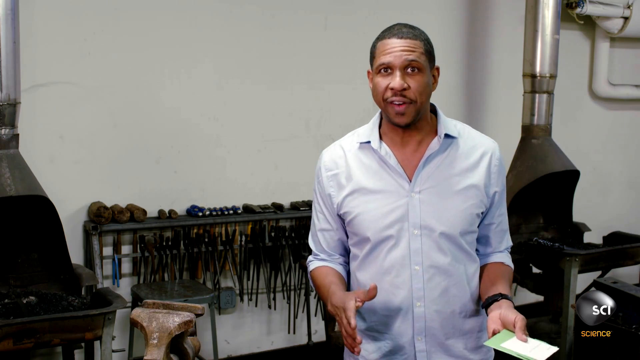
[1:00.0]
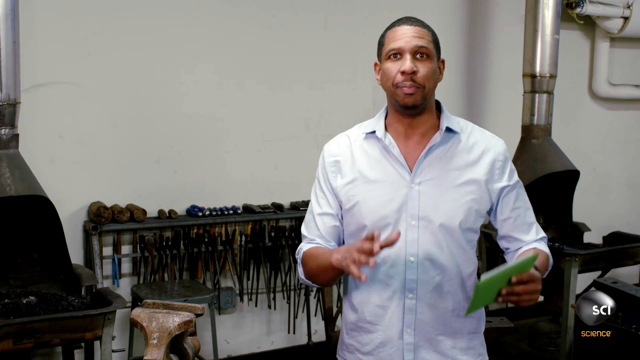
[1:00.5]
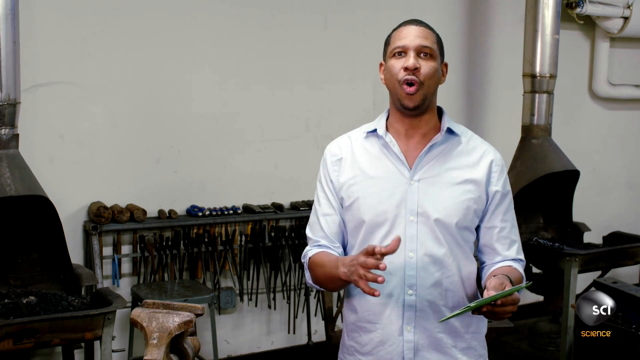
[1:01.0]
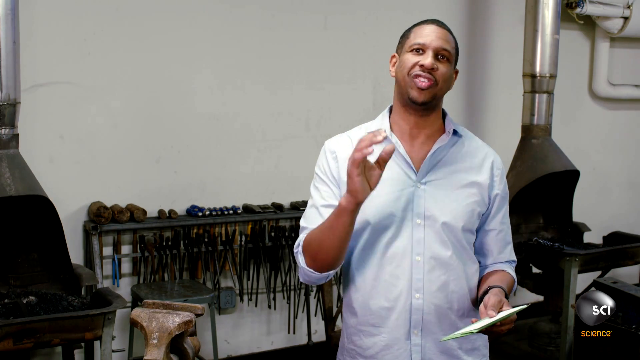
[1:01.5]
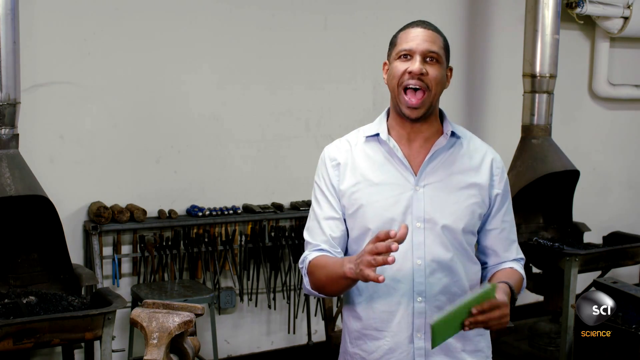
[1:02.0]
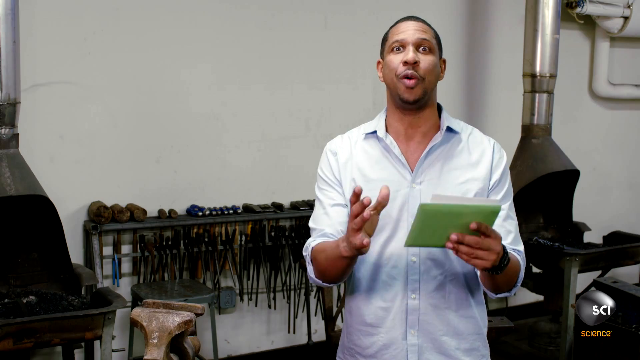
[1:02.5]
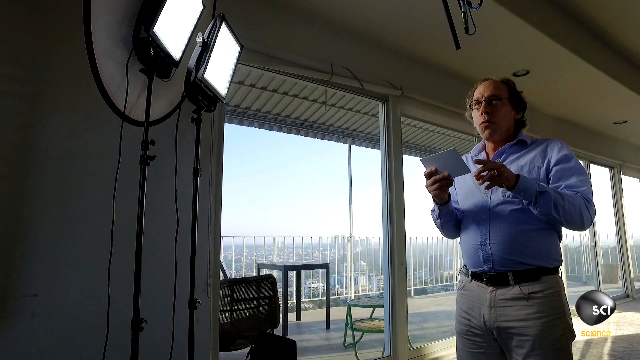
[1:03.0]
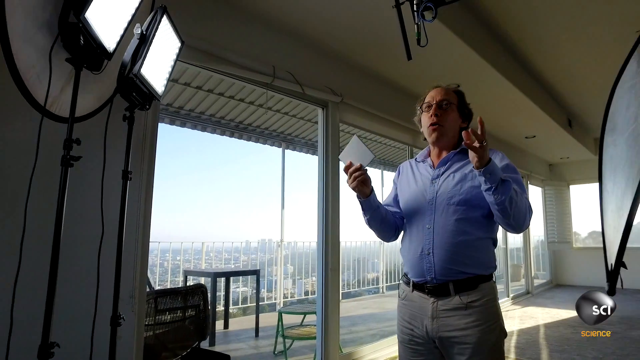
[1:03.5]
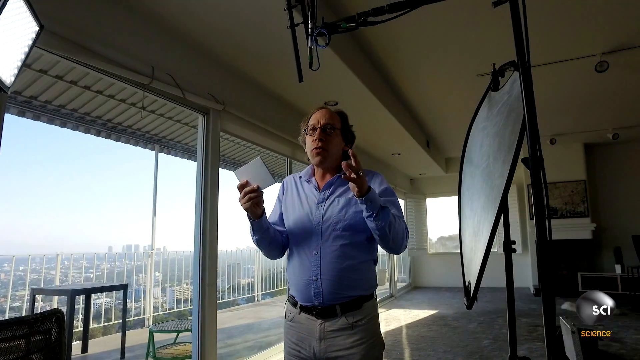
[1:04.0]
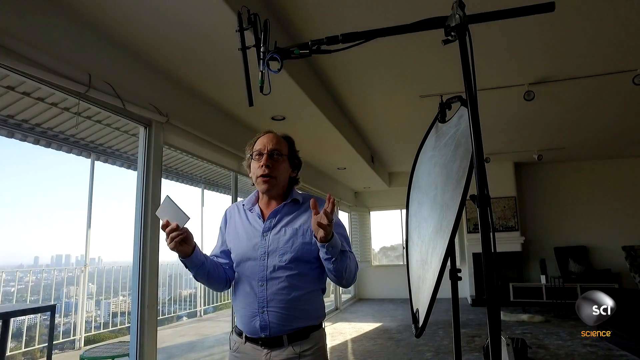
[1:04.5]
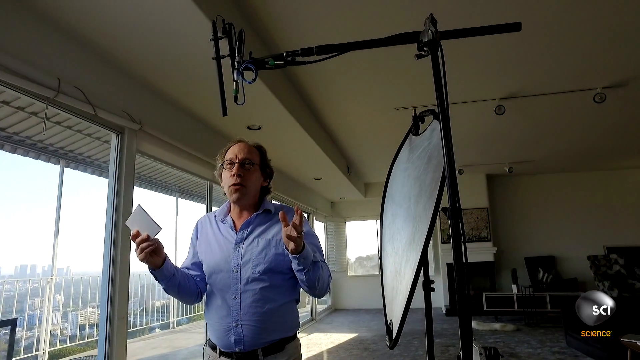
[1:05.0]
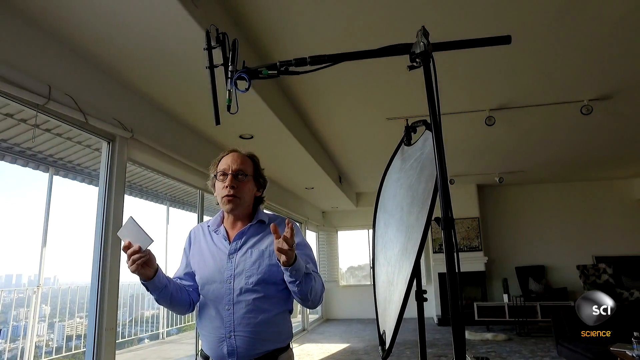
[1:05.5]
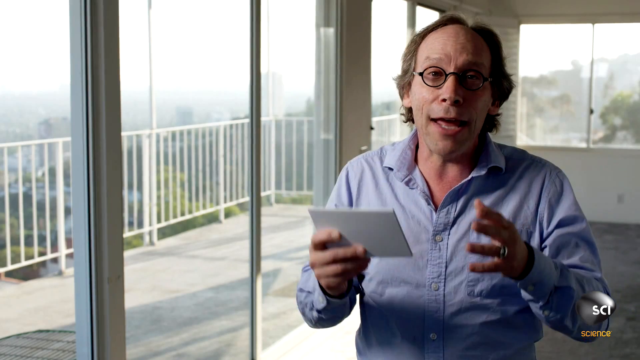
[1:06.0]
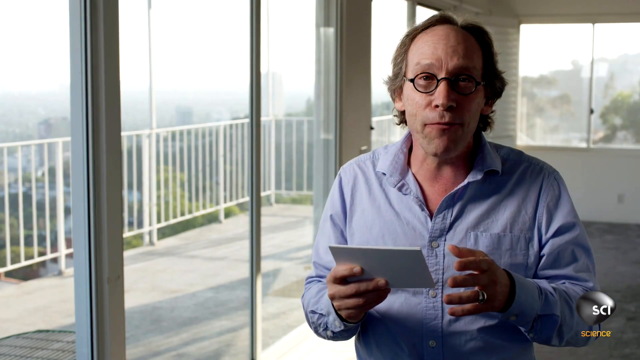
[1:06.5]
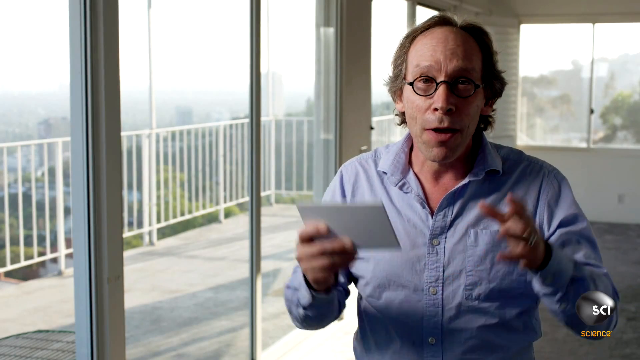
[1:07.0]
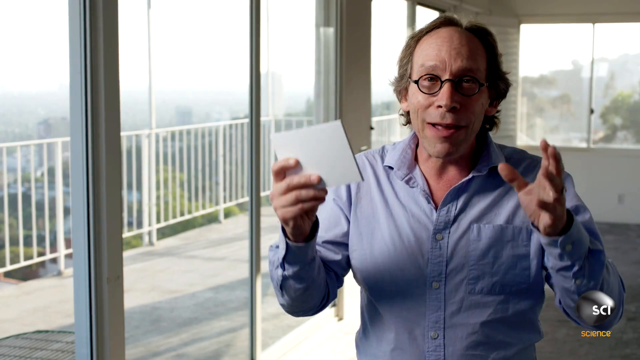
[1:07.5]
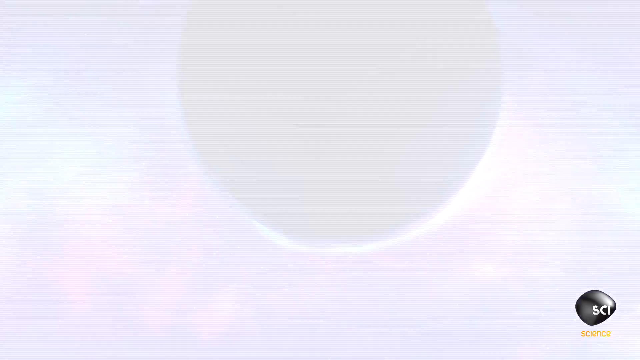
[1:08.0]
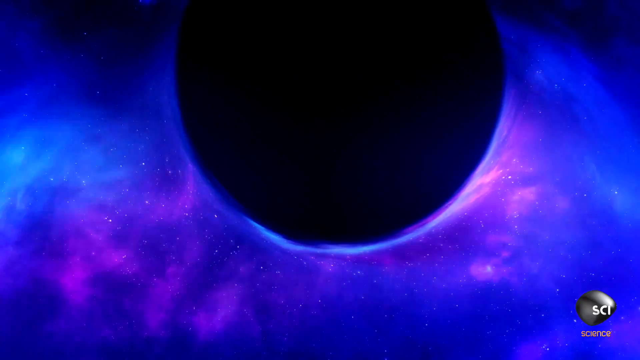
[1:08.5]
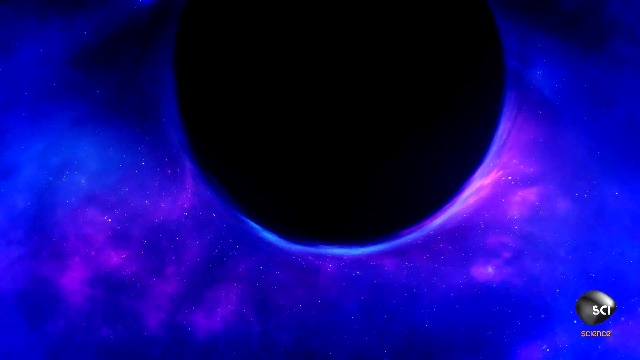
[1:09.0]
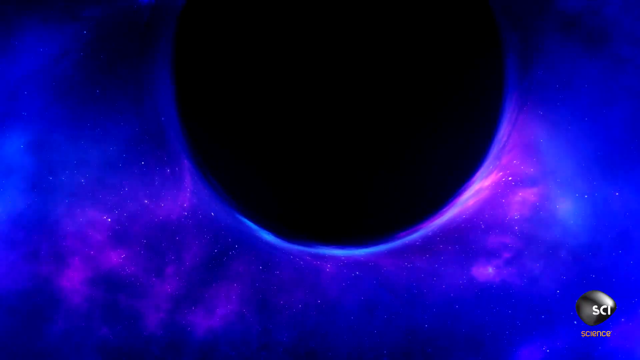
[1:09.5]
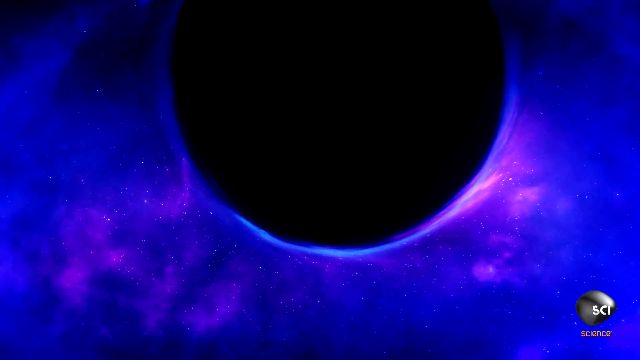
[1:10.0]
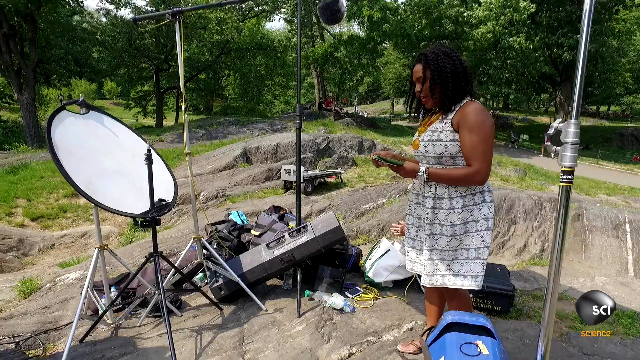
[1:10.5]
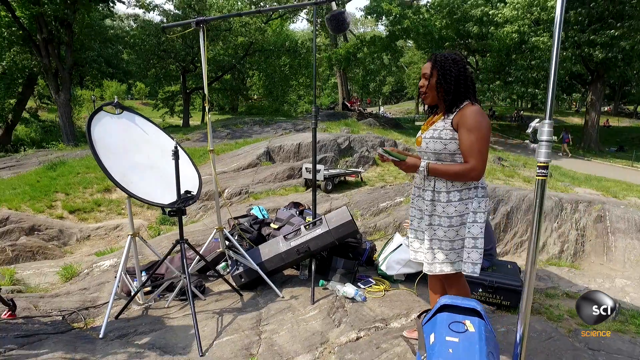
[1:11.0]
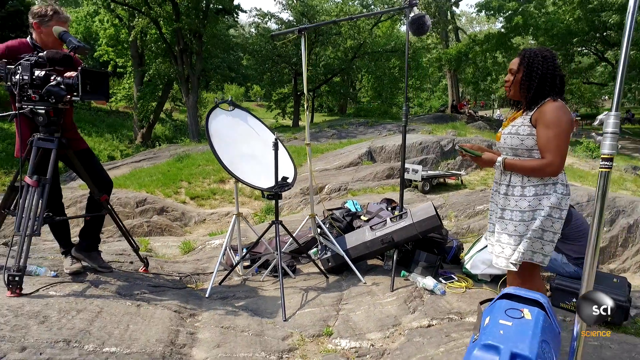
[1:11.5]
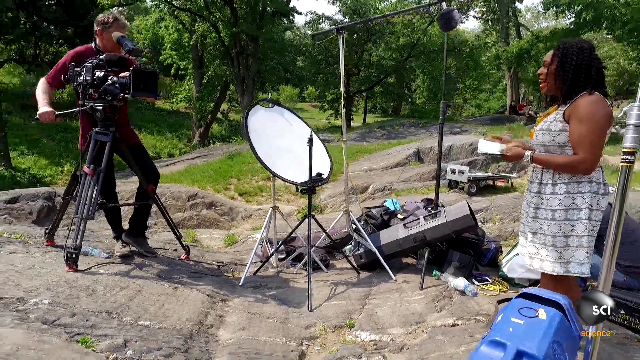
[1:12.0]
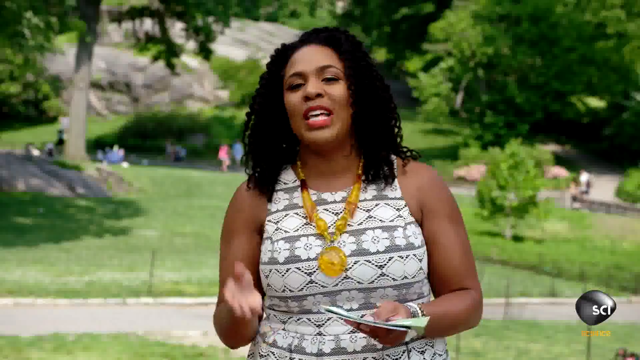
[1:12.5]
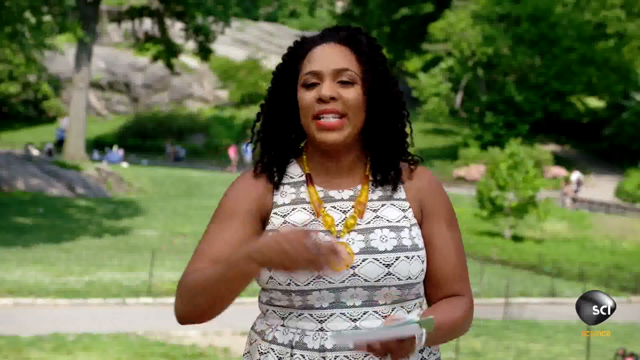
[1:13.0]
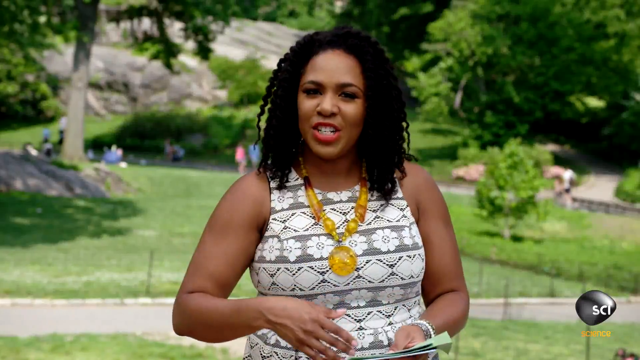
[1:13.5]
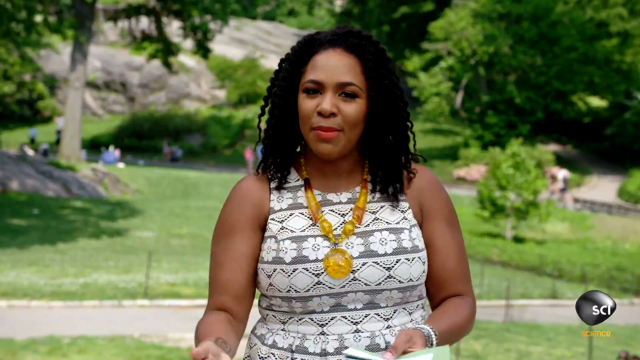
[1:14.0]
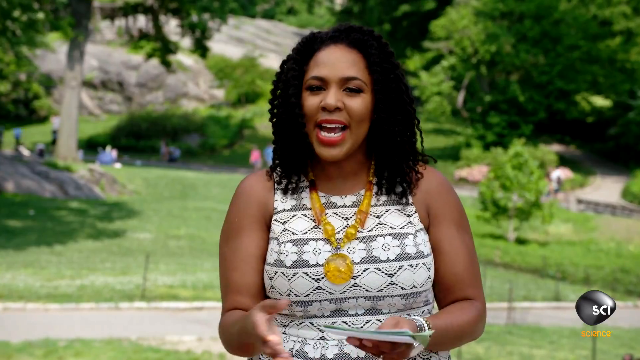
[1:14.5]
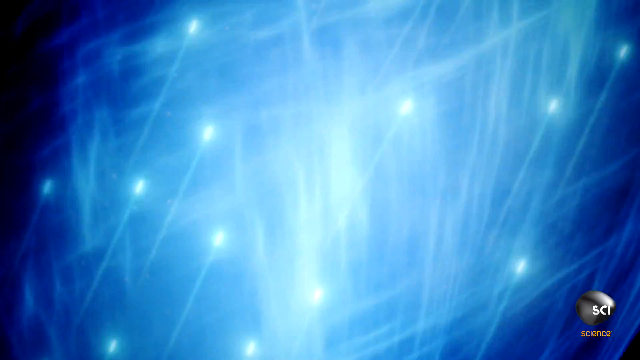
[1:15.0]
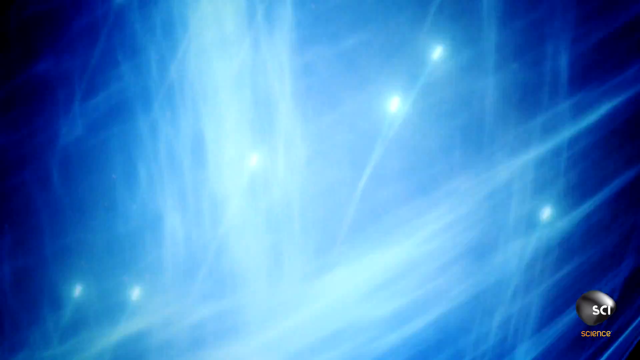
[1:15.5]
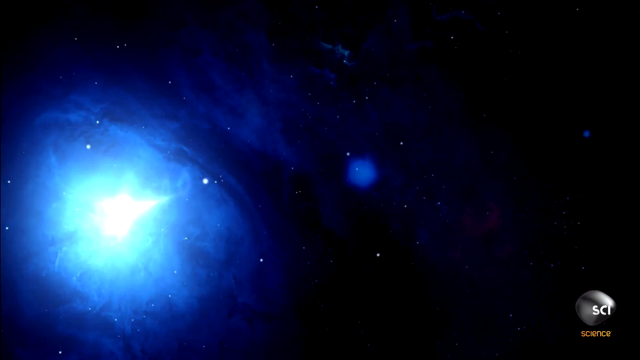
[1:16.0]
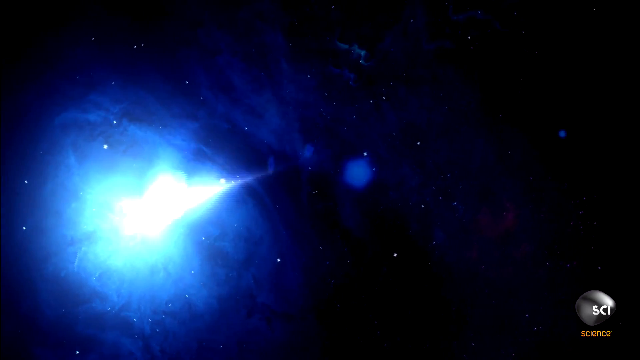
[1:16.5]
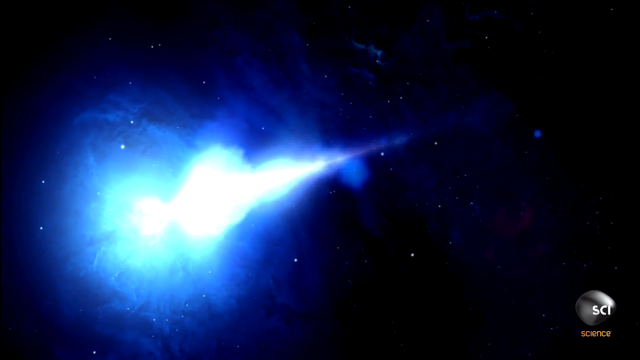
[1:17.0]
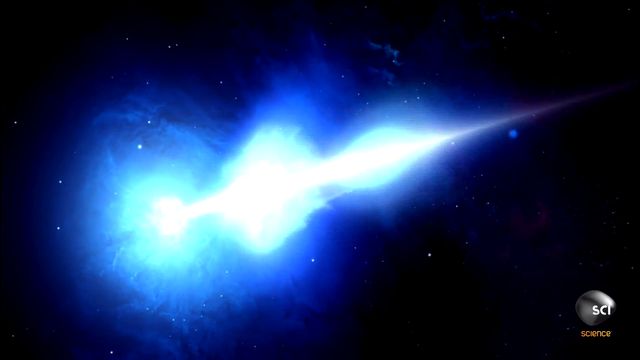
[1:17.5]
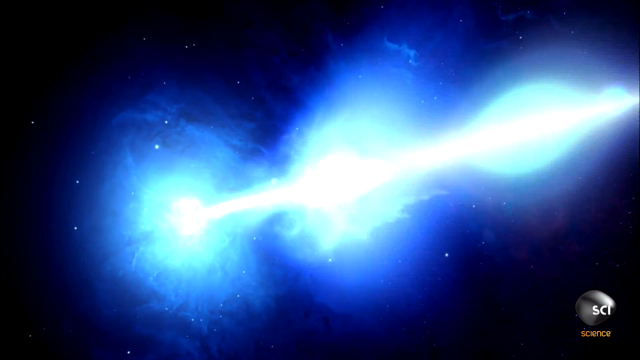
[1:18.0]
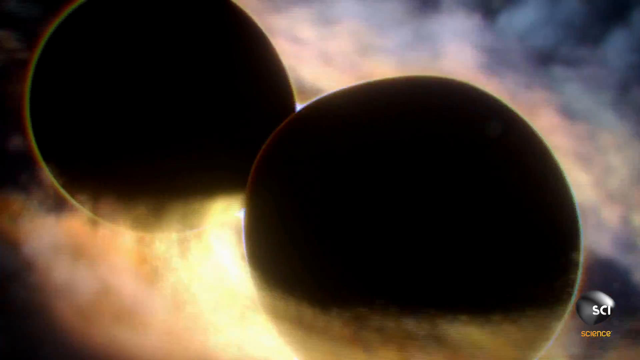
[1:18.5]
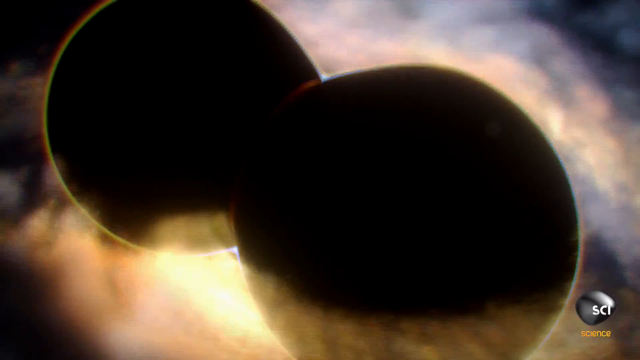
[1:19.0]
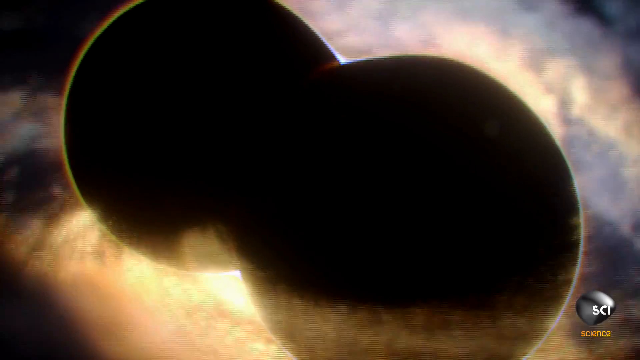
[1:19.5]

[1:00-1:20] A man stands in a room with white walls. He is African, wears a white shirt and a wristwatch on his left wrist. As he speaks, he raises his arms up to his chest, holds the green envelope in his left hand, and leans back a little before bringing both hands in front of his body. The video switches to a man facing left in a room with a view of the city outside. He wears glasses, a blue shirt and beige pants and holds paper in his left hand. The camera pans right, revealing a sound mic above the man as he raises his arms while speaking. The angle changes to zoom in on him as he raises his arms, lowers them, and raises them again while speaking. Next is a depiction of a black hole with eerie purple and blue energy beneath it. The video then switches to a woman being recorded outside in a park or other outdoor area. She wears a white dress, faces left and is surrounded by equipment. The camera pans left to reveal a man operating a camera, wearing a dark red shirt and jeans and facing right. The angle changes to one directly in front of the woman, who wears a gold necklace and speaks toward the viewer. The video shifts to a swirling mass of blue light, then changes angle to show the blue light exploding out toward the right side of the frame, and then shows two celestial bodies colliding with one another.